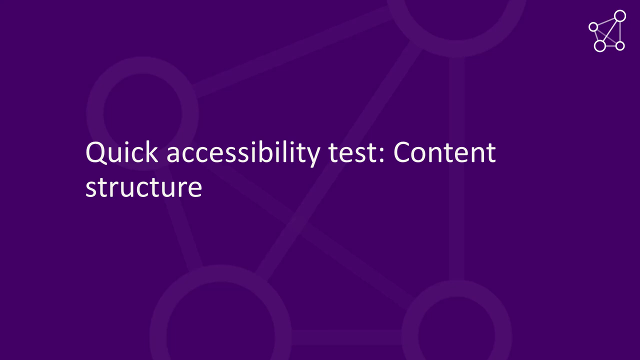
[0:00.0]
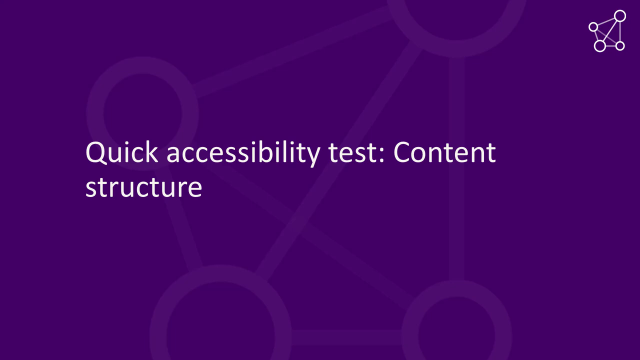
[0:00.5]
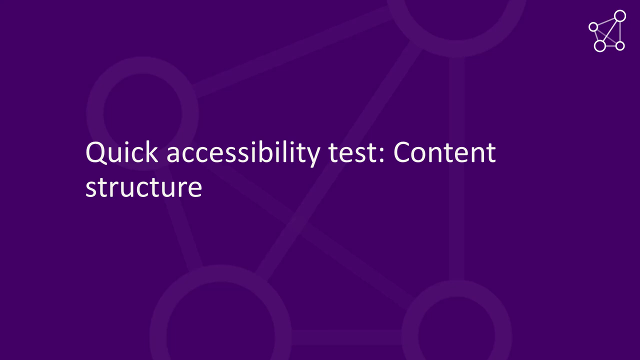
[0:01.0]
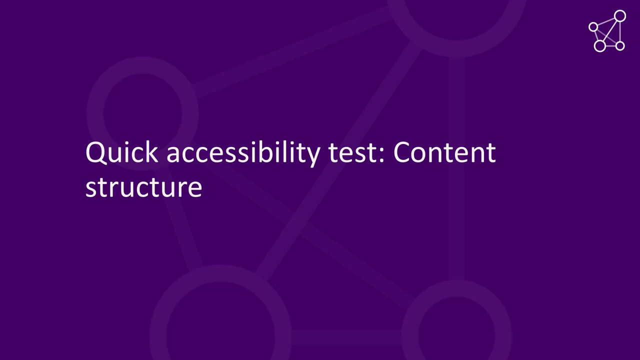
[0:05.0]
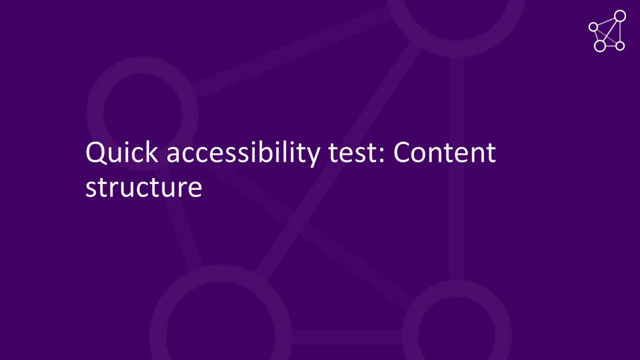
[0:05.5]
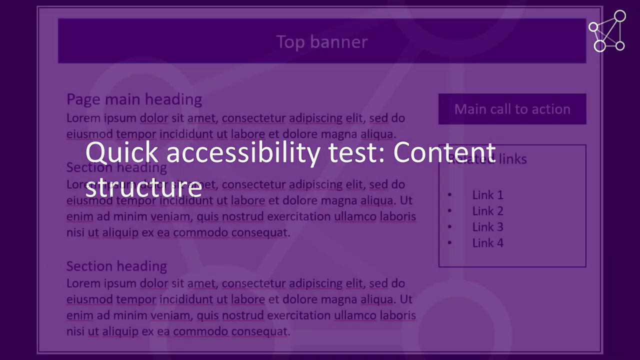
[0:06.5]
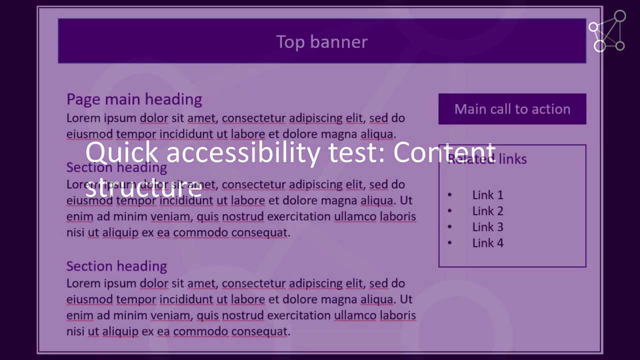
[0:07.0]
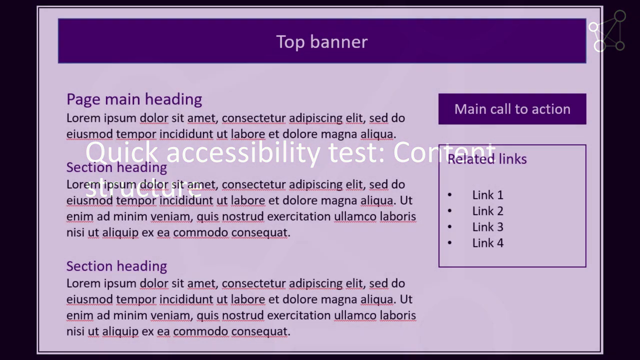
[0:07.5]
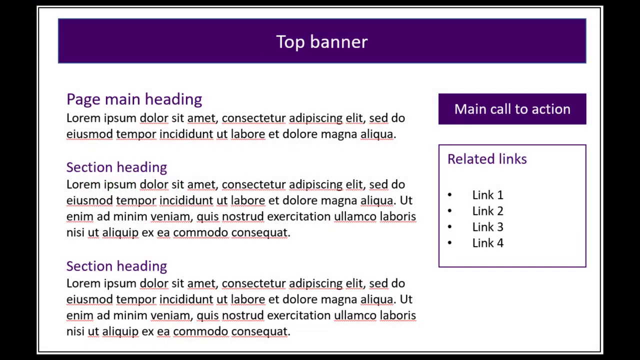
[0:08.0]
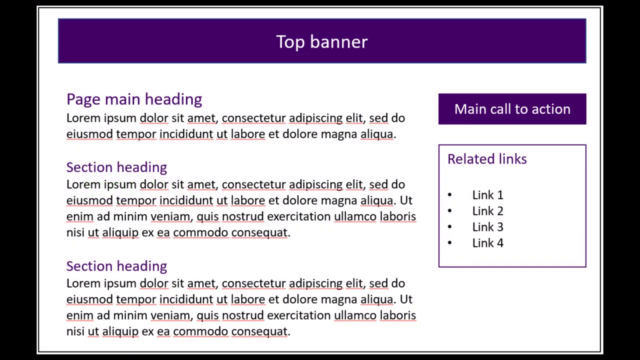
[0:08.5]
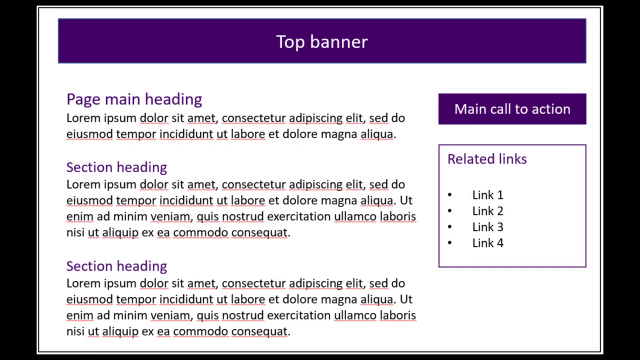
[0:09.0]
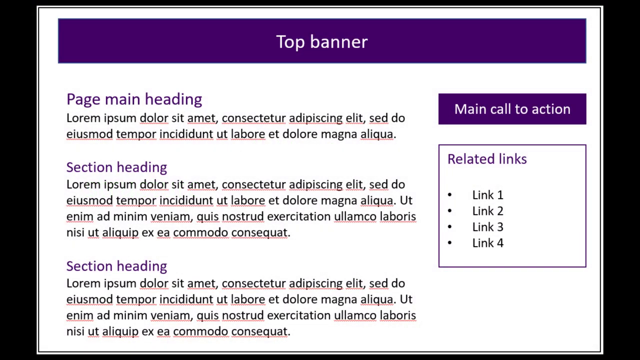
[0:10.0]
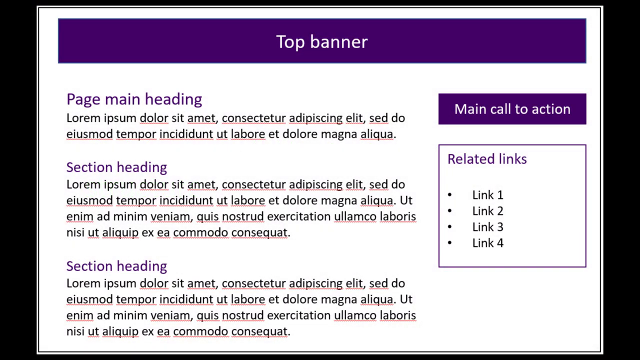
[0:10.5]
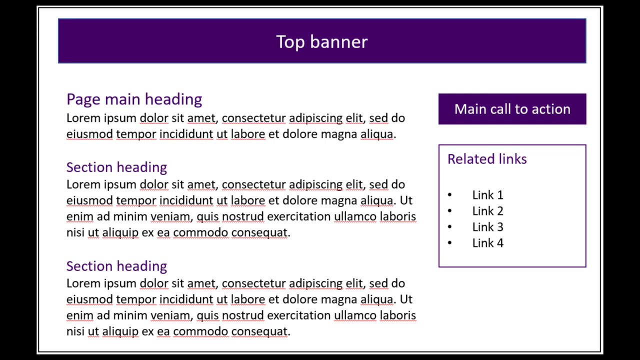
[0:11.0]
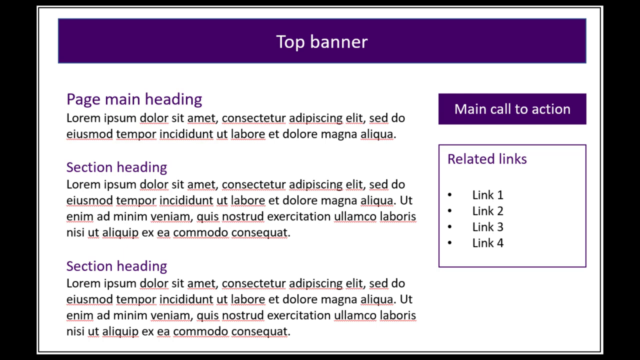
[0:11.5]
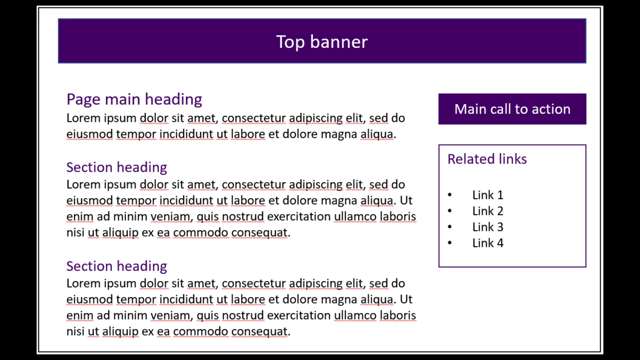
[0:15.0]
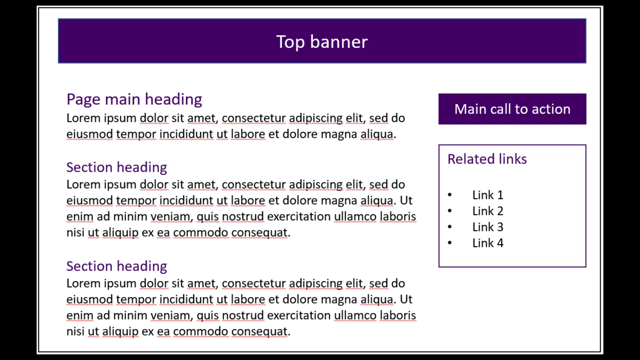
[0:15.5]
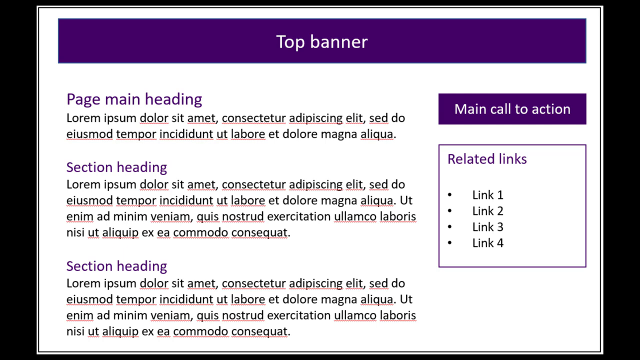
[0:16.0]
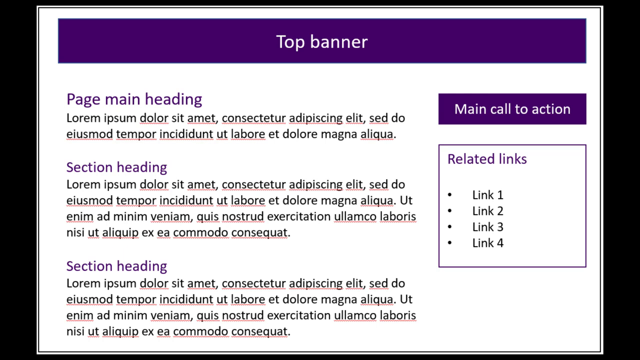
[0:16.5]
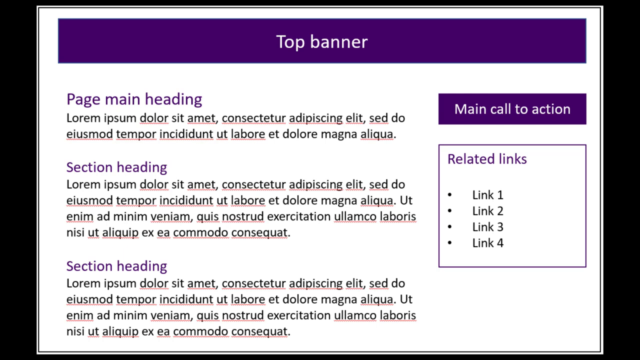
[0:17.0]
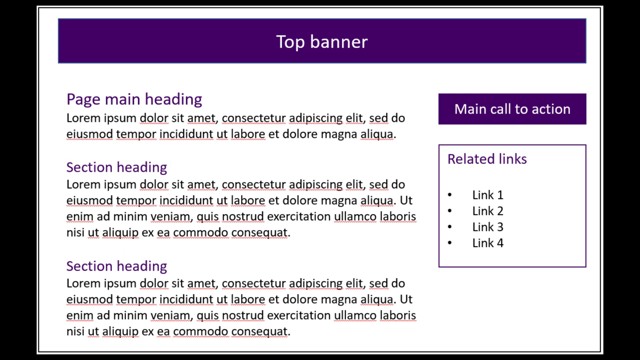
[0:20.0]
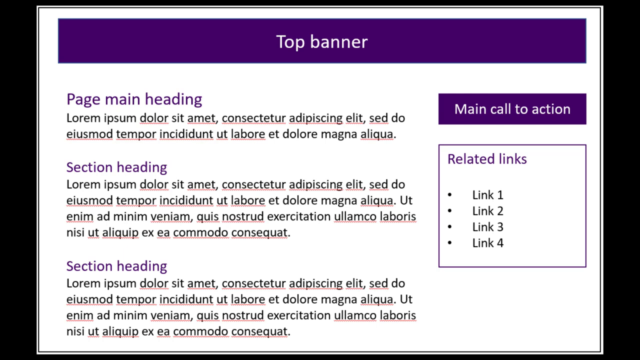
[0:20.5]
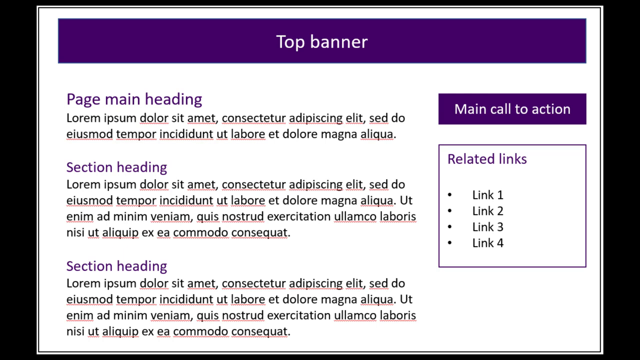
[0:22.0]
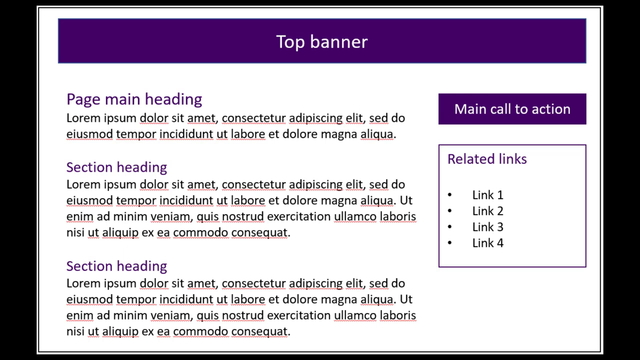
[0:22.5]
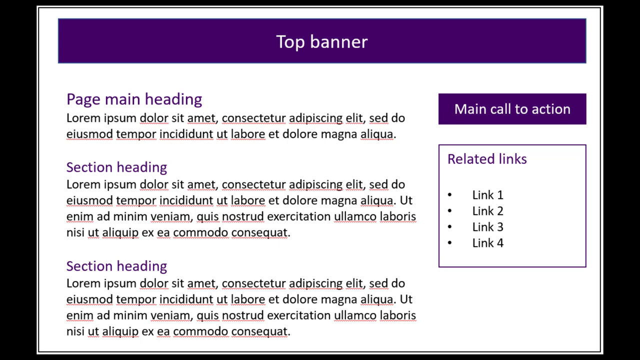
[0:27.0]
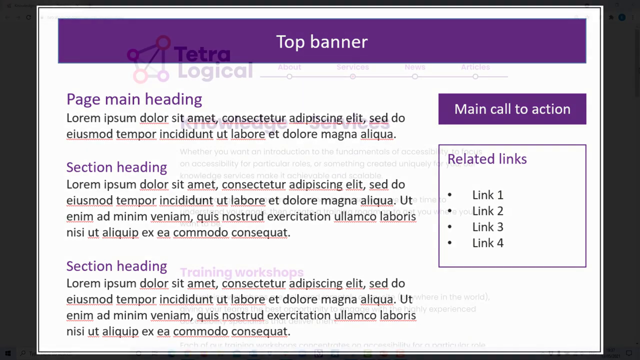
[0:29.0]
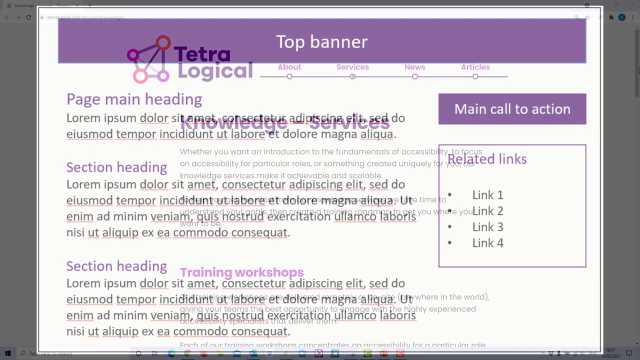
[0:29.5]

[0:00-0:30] A page with text on a purple background opens the video; the purple background has a geometric design, and the text reads "quick accessibility test content structure." This stays on screen for a few seconds. The same graphic design embedded in the background also appears in a corner, apparently the top right. Next comes another page showing information: a white page in landscape format with a purple box that runs across the entire top. It looks like a dummy mock-up of a website page. In the purple box, in white font, is "top banner." Underneath is a section header that says "page main heading," followed by lorem ipsum text. Then there is a section heading section, and under it another header that says "section heading," again followed by the same lorem ipsum dummy text. On the right side is a box with "main call to action" above it. Inside the box it says "related links" and has placeholder text such as "link one, link two." Everything is on a white background, with purple and with white and black text.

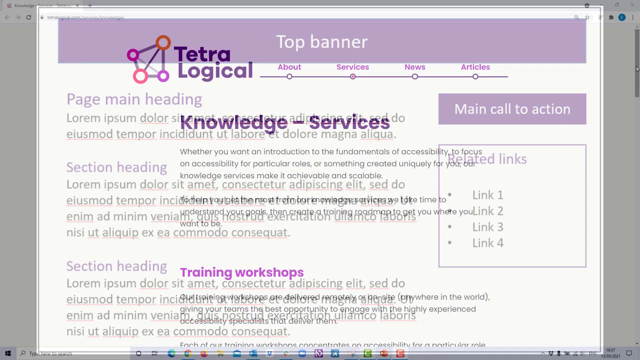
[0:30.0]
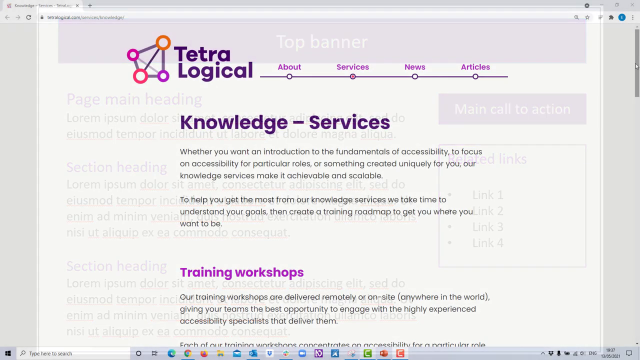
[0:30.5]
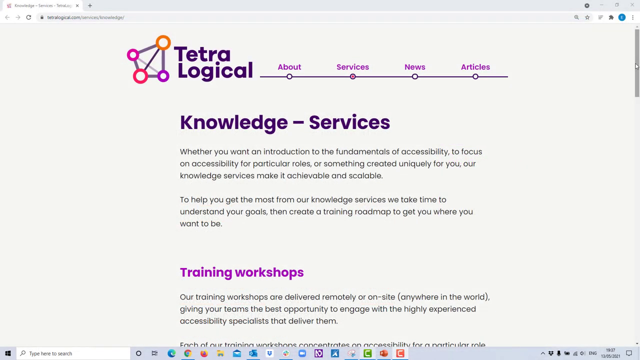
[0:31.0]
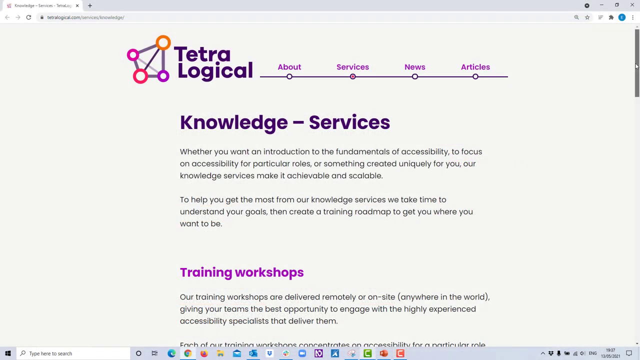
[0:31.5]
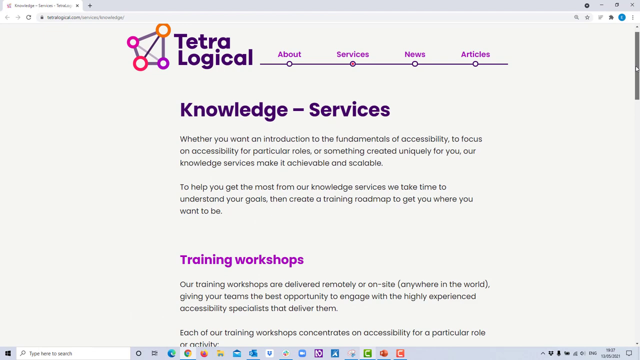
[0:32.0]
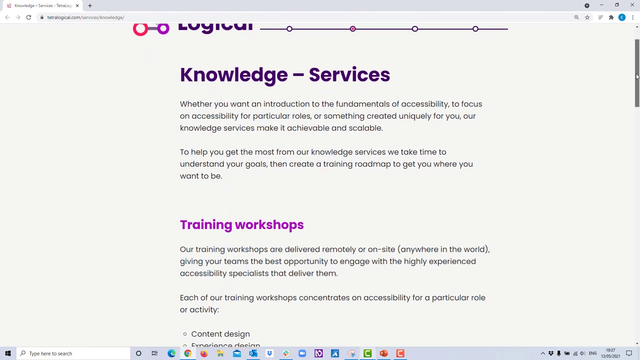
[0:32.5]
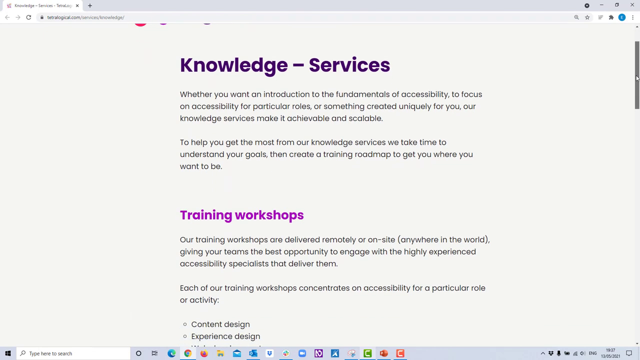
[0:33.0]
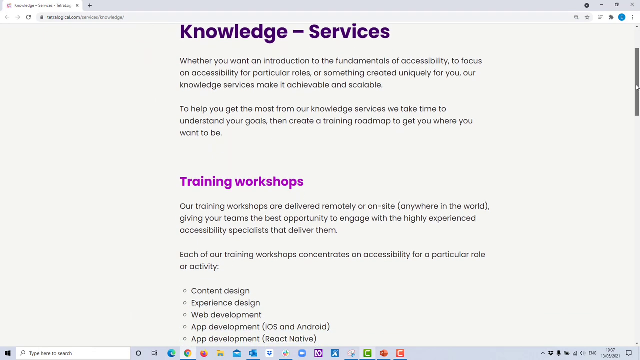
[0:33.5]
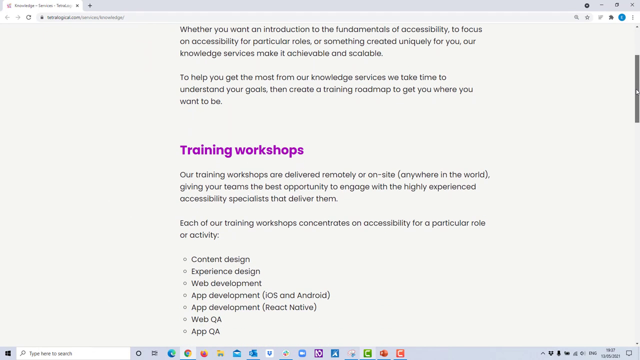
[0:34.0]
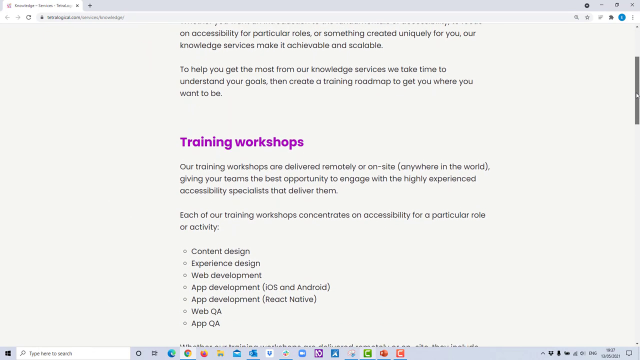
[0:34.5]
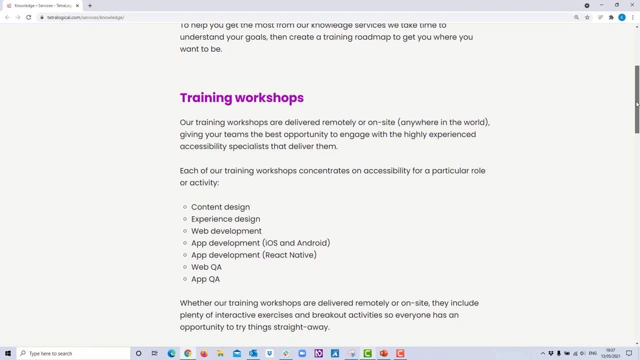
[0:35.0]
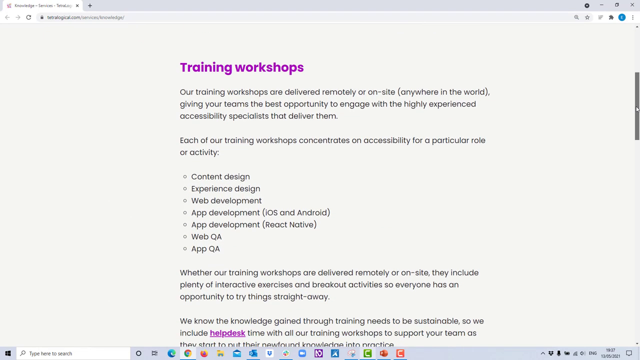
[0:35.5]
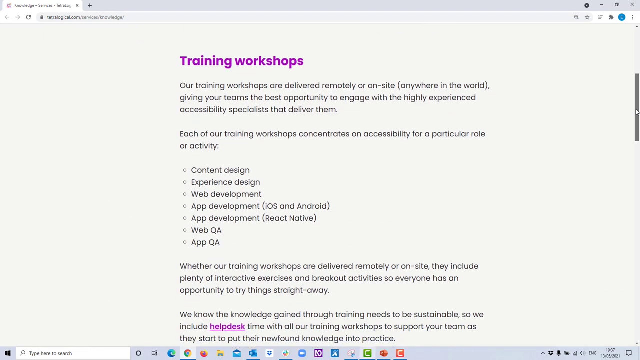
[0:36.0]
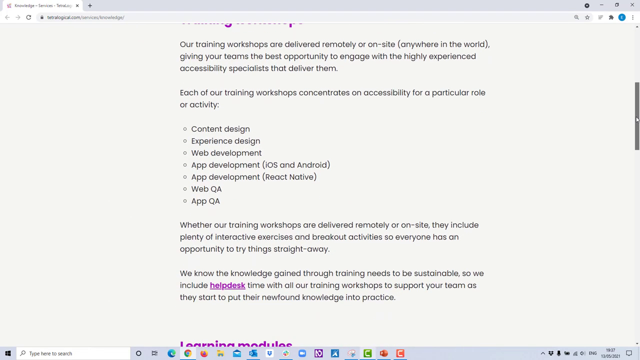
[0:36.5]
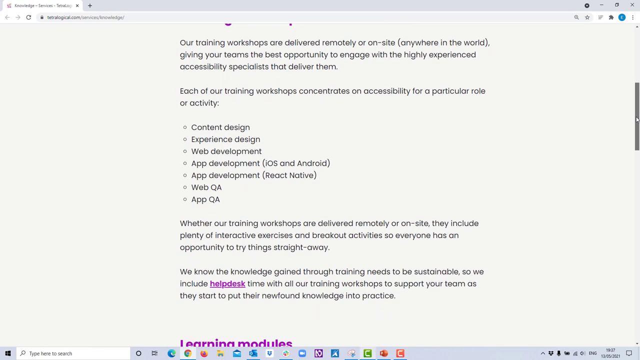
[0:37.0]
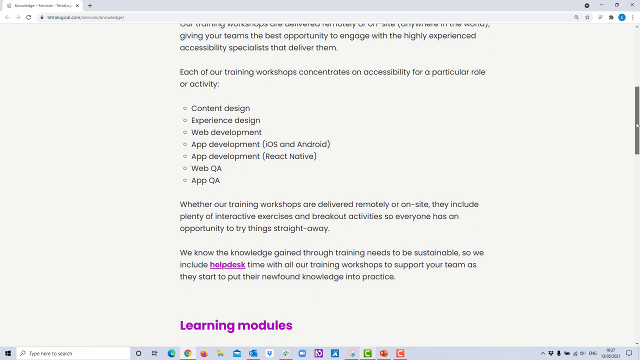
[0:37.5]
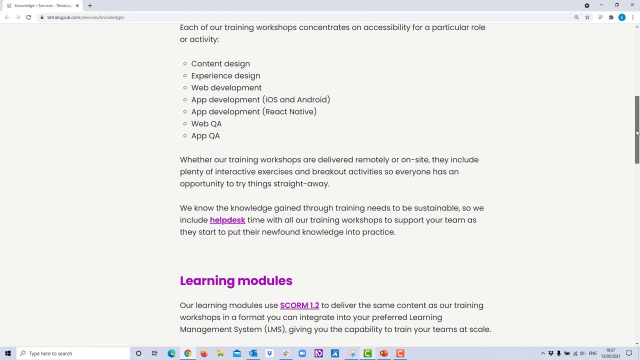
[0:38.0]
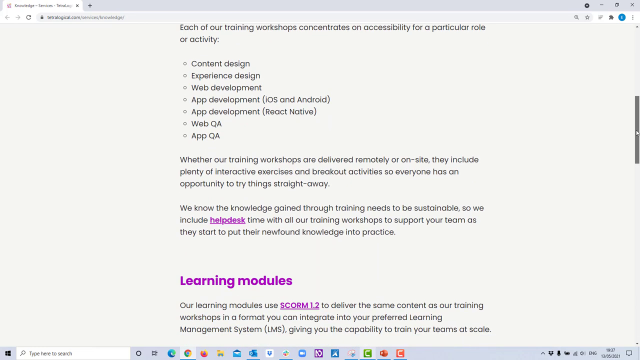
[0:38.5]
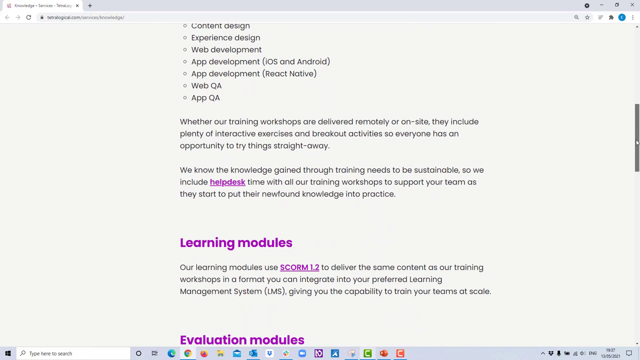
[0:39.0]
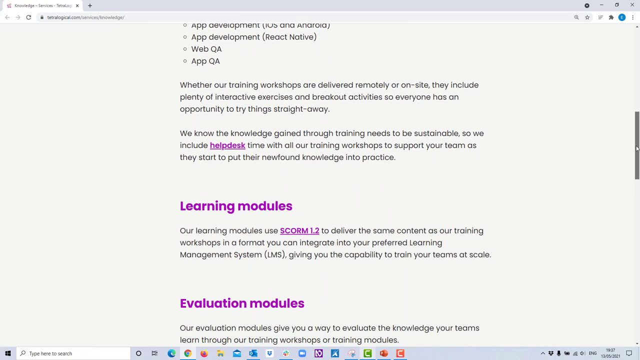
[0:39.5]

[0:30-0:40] One page fades into another. The page it fades into, a landscape-format web page, has a header that says "Tetra Logical," with apparently its logo next to it. A few menu options are at the top: "About," "Services," "News" and "Articles." Underneath is the first header on the page, "Knowledge services." Only perhaps the first third of the page is shown. A couple of paragraphs sit under that header, followed by content about training workshops. The page scrolls down a little, showing content about content design and experience design.